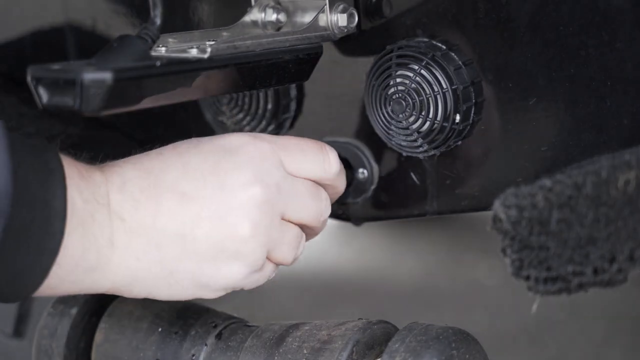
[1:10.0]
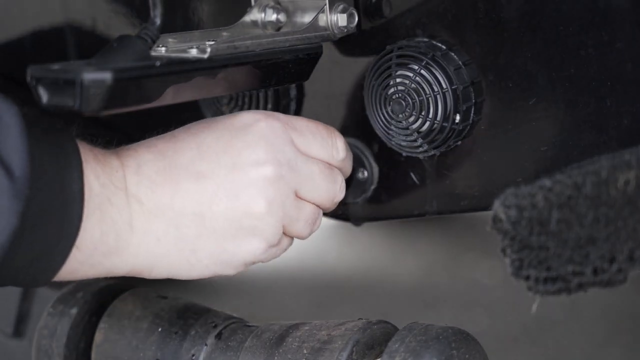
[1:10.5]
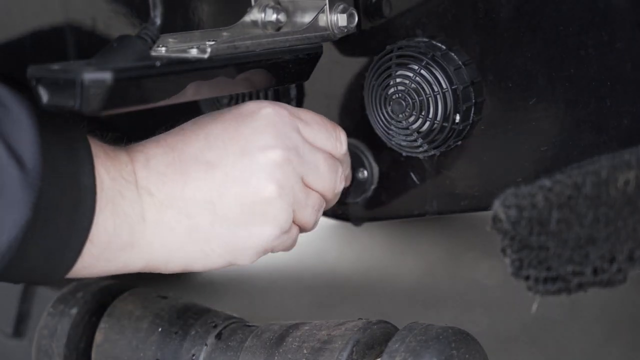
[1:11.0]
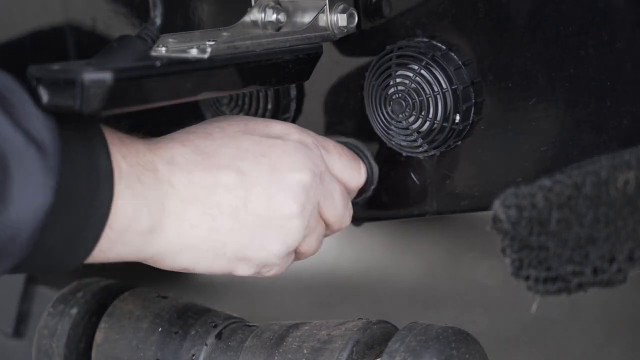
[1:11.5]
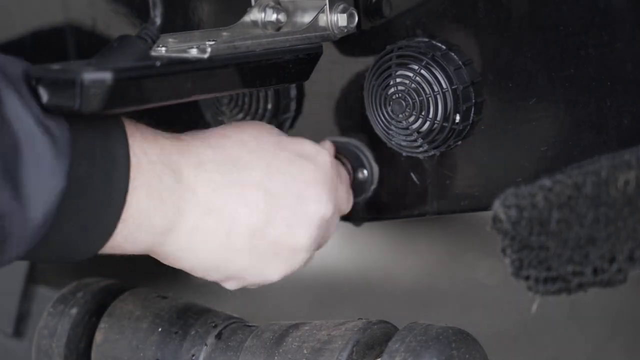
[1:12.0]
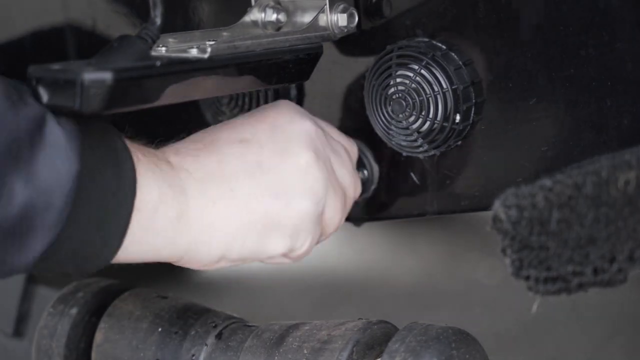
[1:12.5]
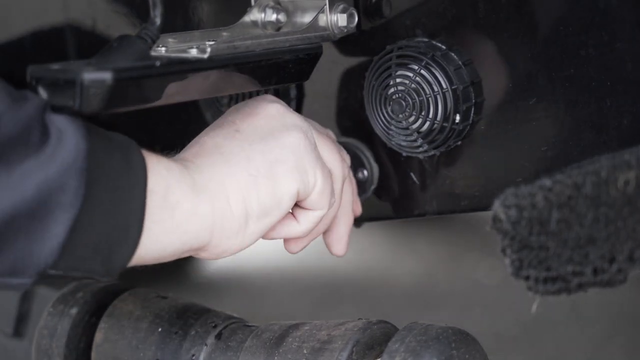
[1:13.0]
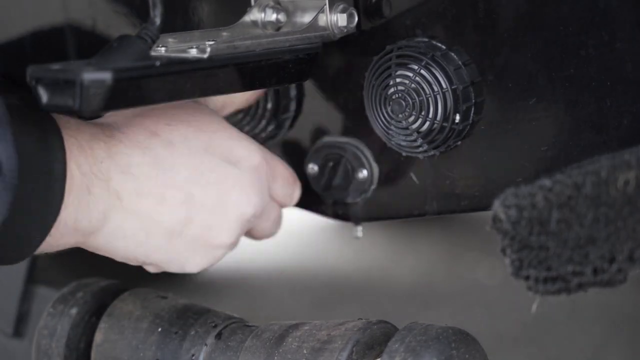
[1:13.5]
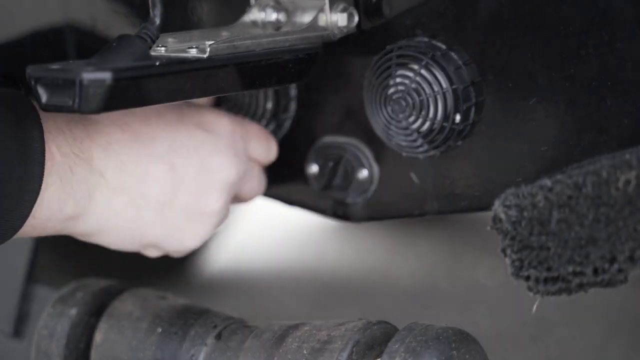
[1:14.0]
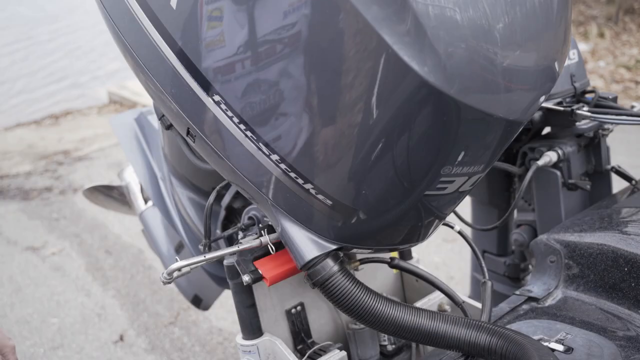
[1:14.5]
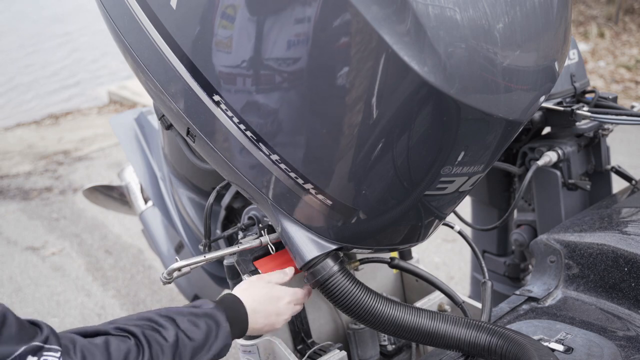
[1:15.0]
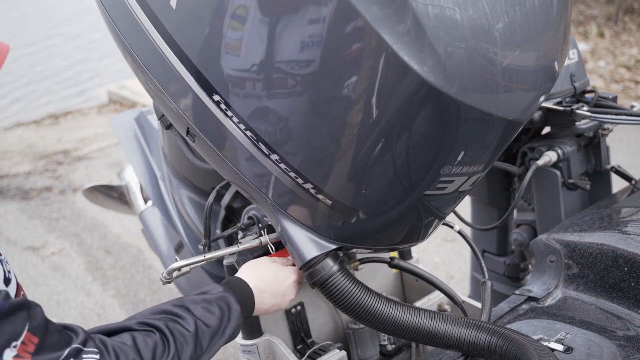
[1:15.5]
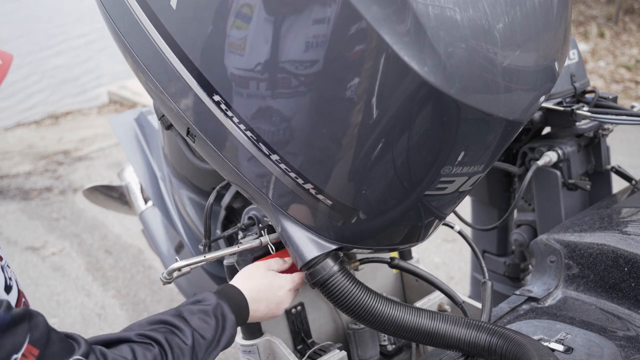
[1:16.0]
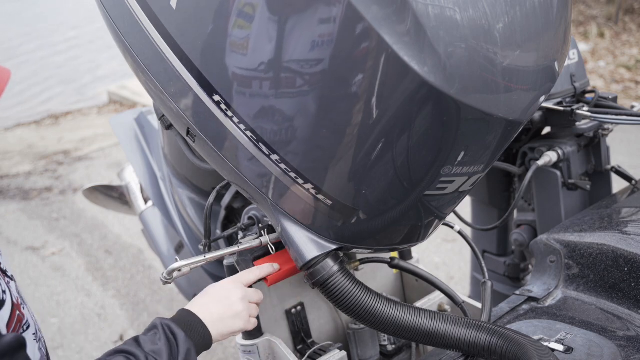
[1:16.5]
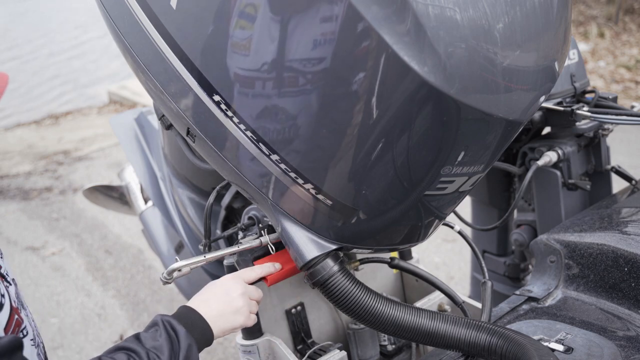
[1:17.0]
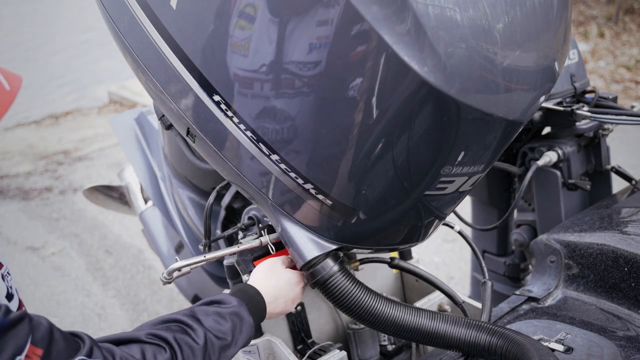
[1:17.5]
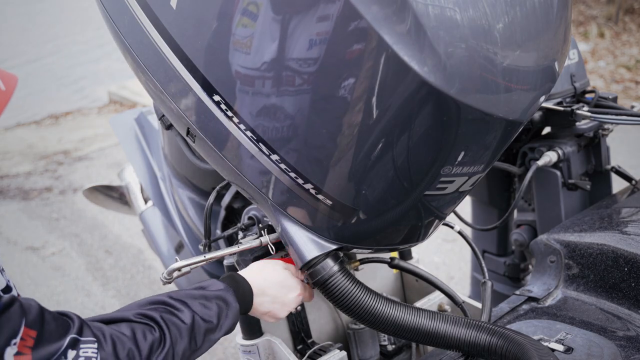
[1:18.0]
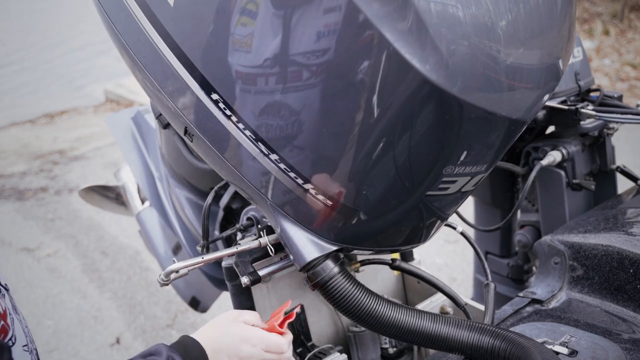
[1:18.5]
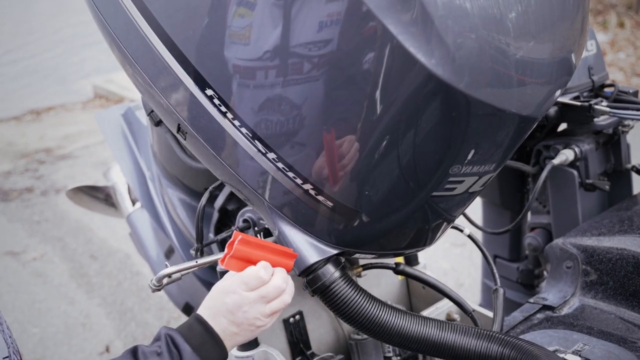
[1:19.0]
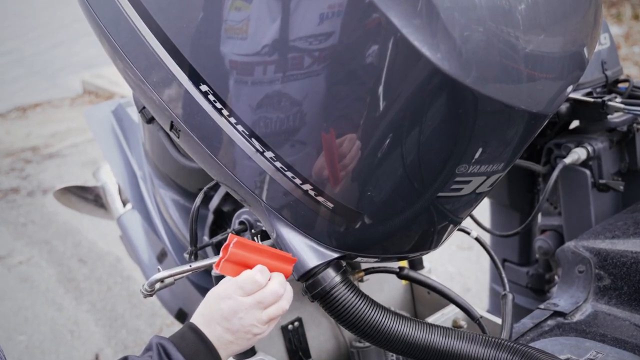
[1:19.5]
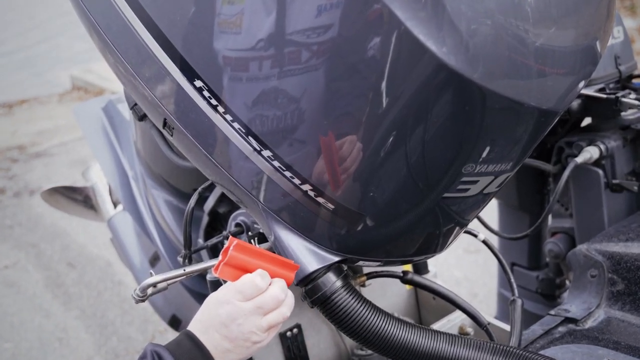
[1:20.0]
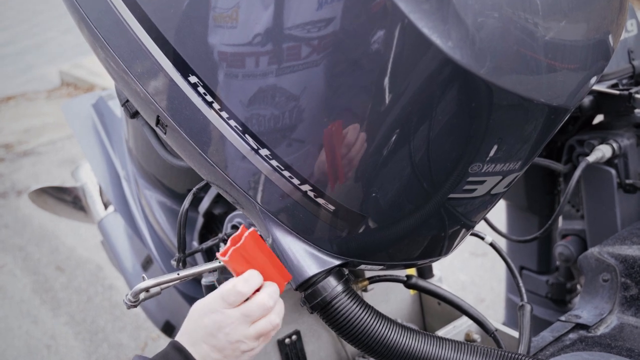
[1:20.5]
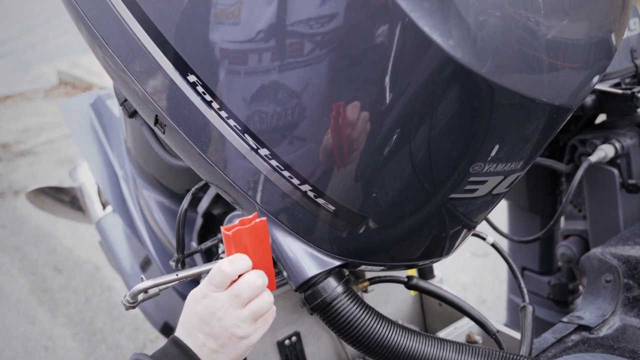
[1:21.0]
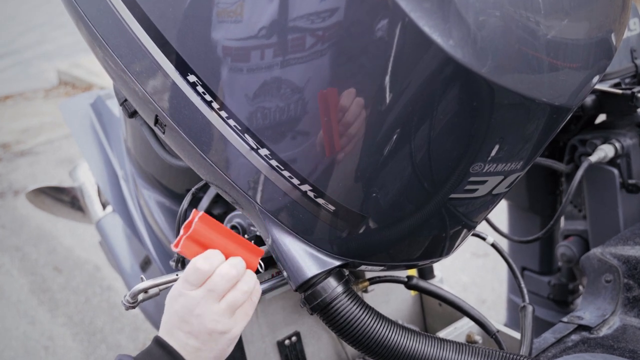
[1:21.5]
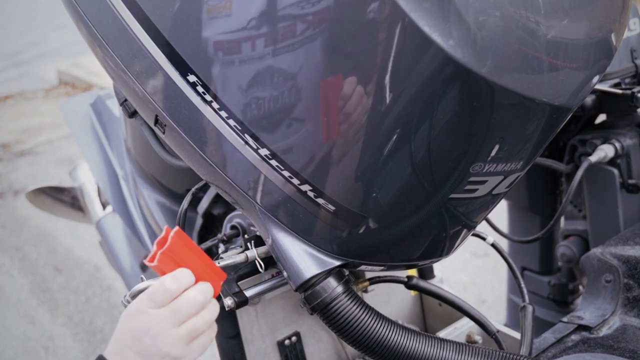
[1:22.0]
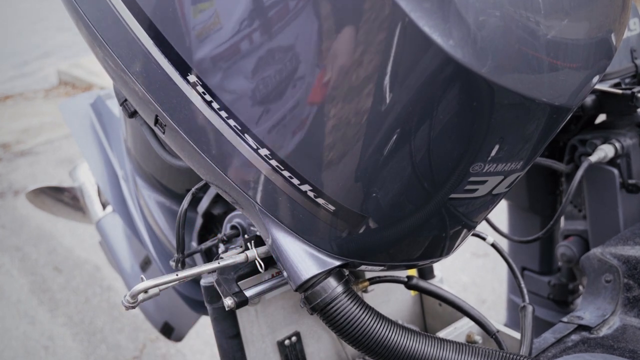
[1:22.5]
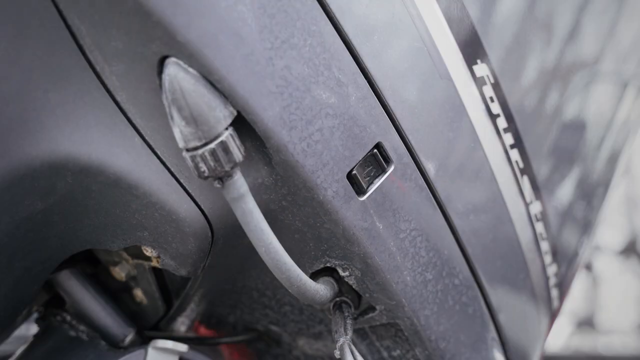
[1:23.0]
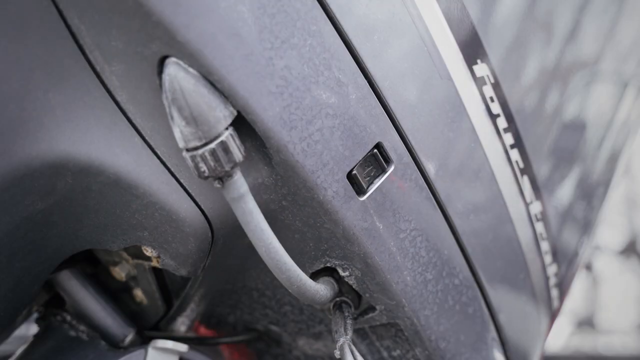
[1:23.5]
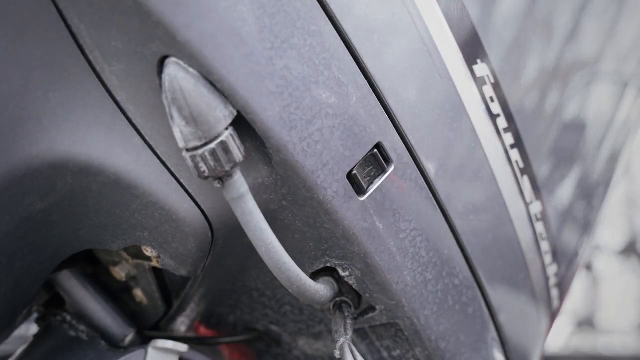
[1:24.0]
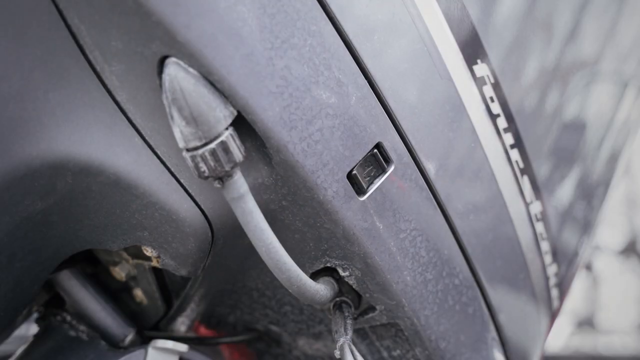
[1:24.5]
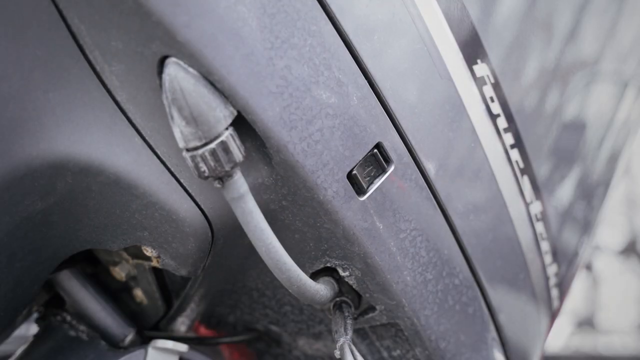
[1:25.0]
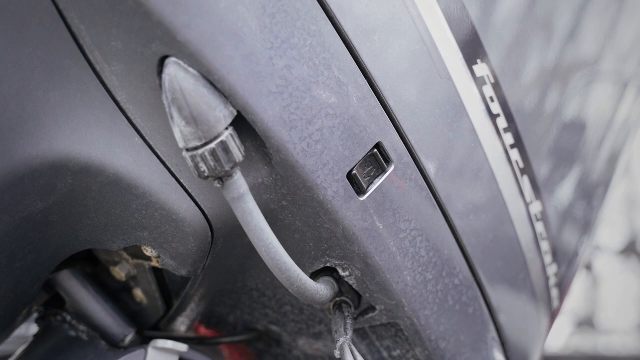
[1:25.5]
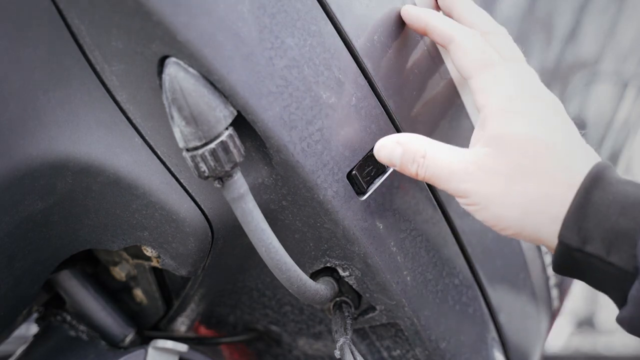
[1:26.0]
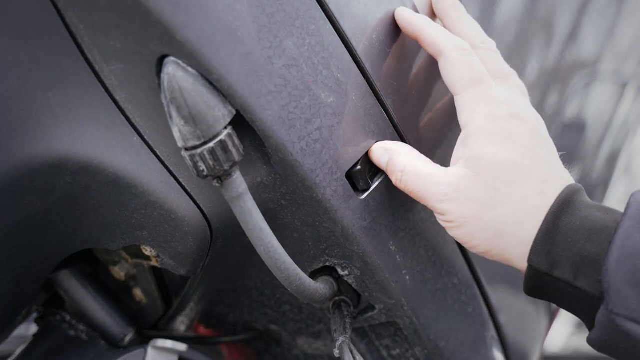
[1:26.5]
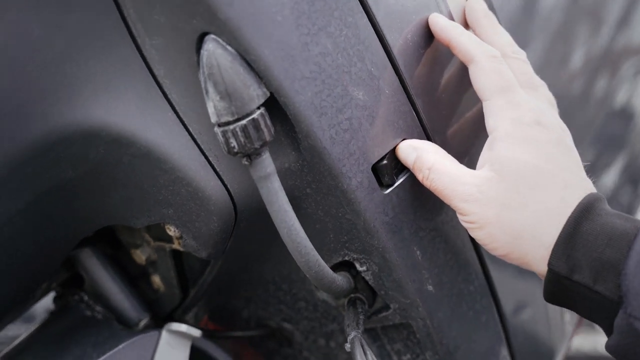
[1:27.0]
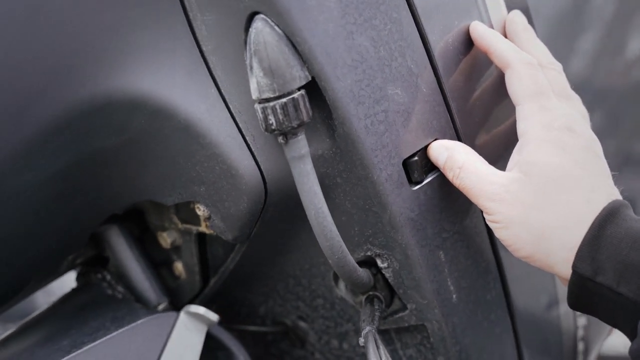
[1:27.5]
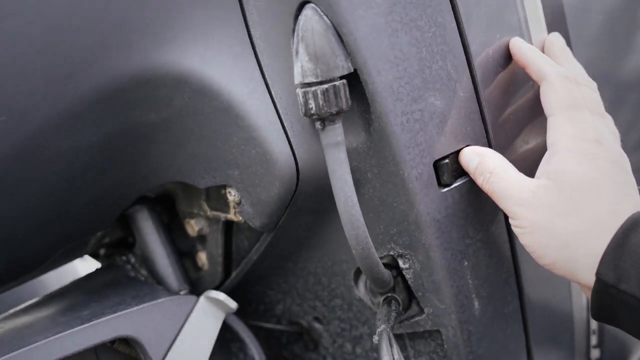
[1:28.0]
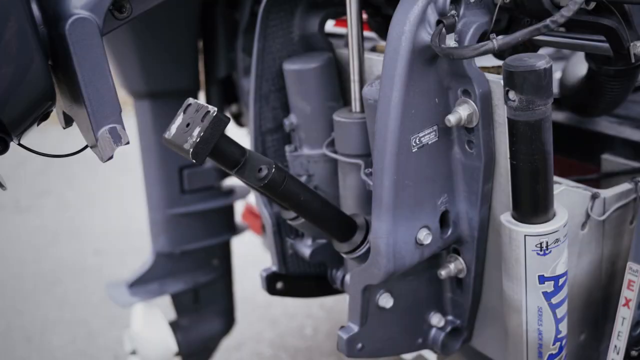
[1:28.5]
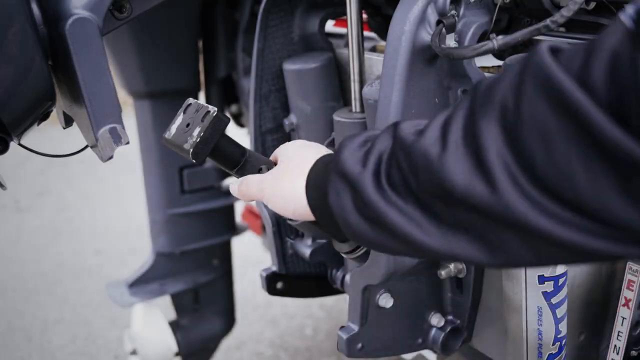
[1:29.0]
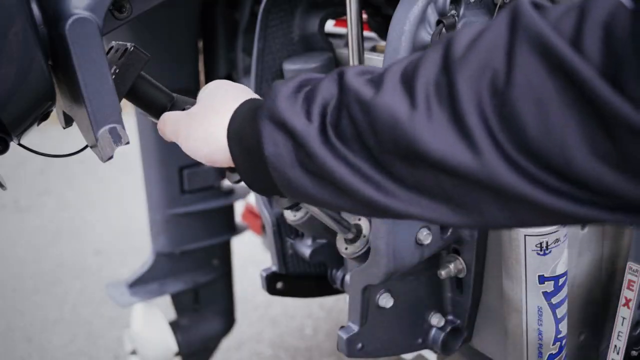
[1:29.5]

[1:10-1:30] The man puts the drain plug into the back bottom side of the boat. He then unhooks a securing coupling from underneath the motor and takes out an orange block. He pushes a button with his finger and the motor raises up slightly, and he takes off a second safety bar from the motor.